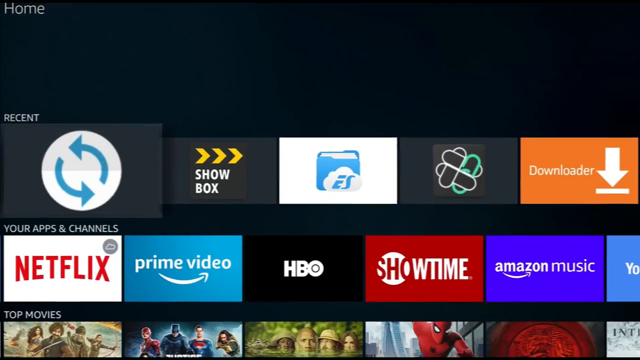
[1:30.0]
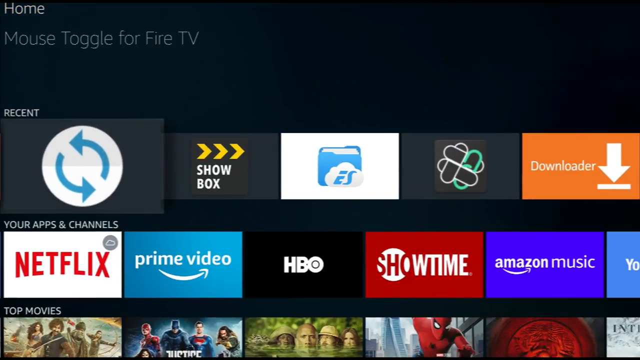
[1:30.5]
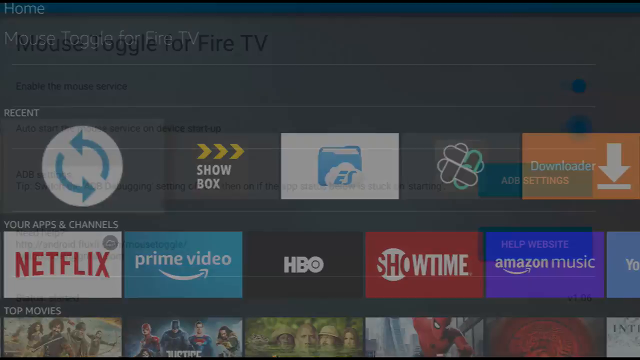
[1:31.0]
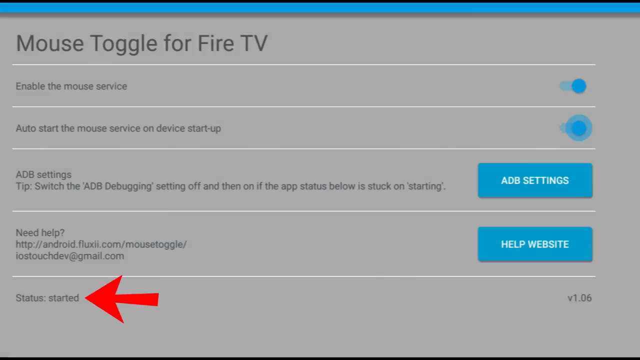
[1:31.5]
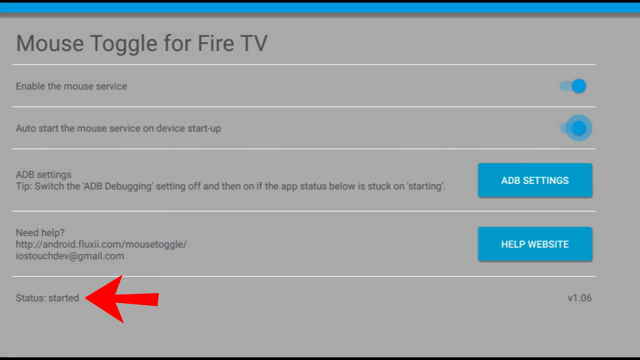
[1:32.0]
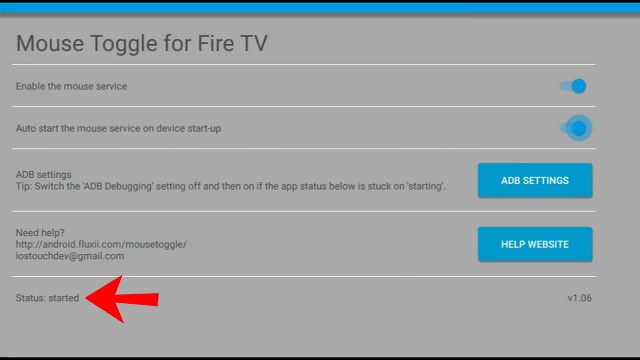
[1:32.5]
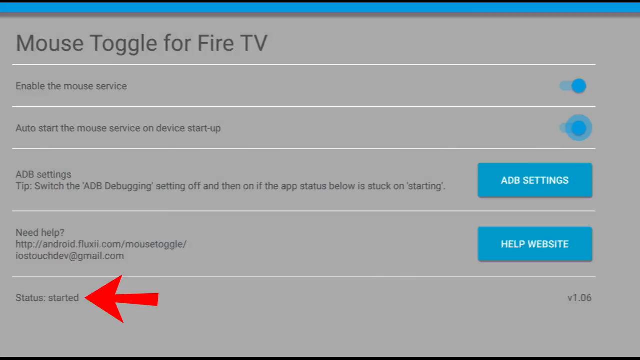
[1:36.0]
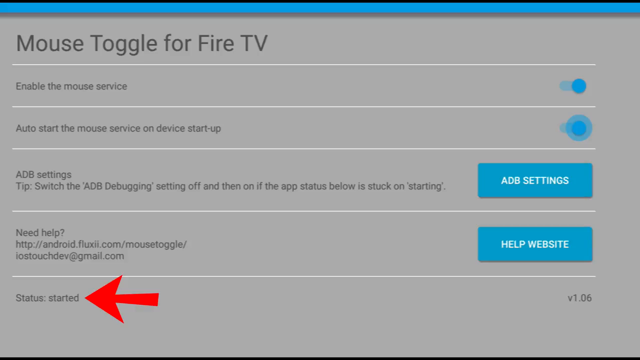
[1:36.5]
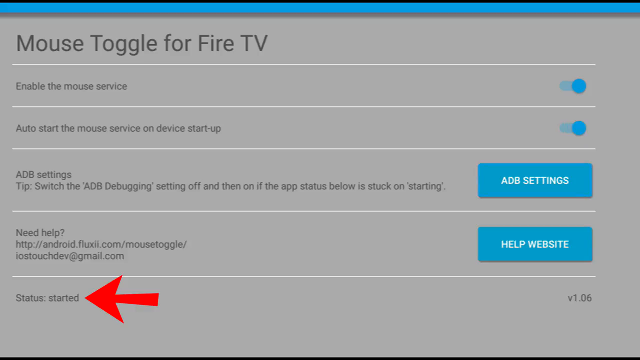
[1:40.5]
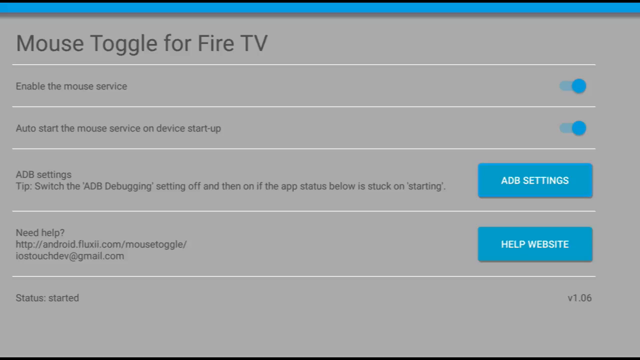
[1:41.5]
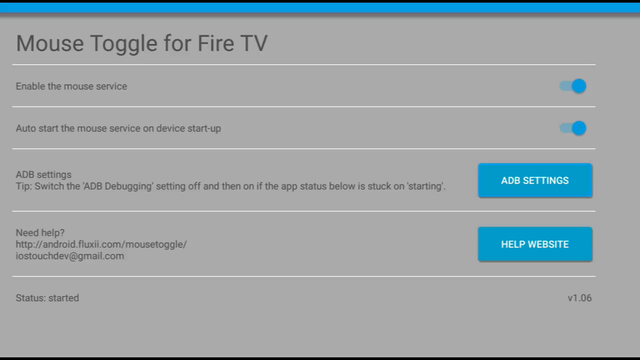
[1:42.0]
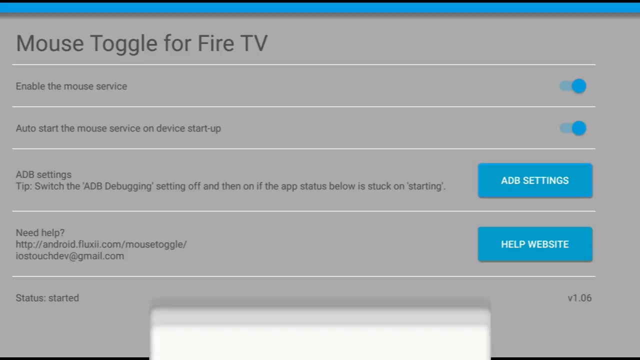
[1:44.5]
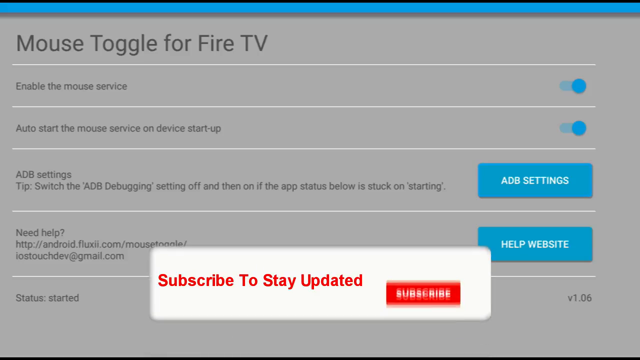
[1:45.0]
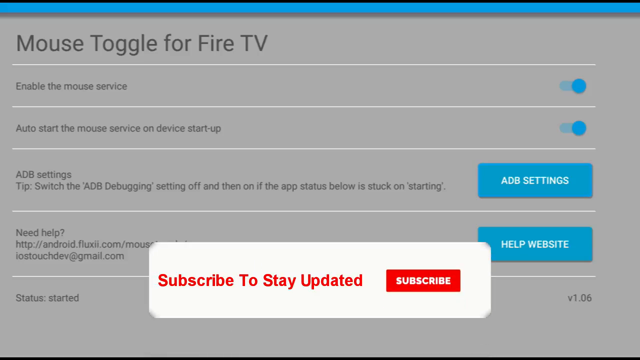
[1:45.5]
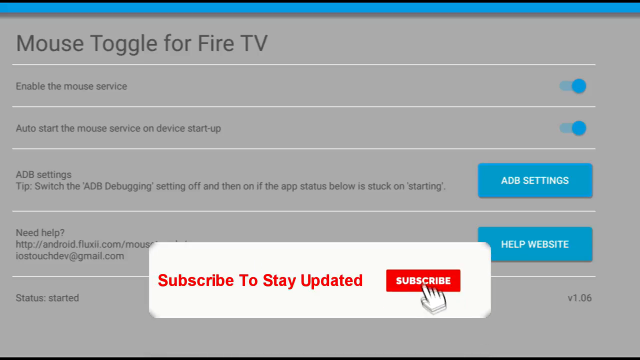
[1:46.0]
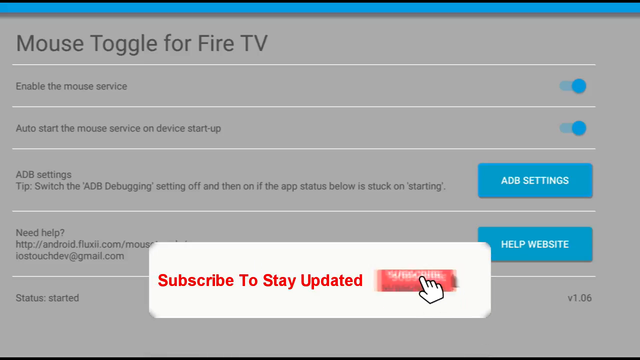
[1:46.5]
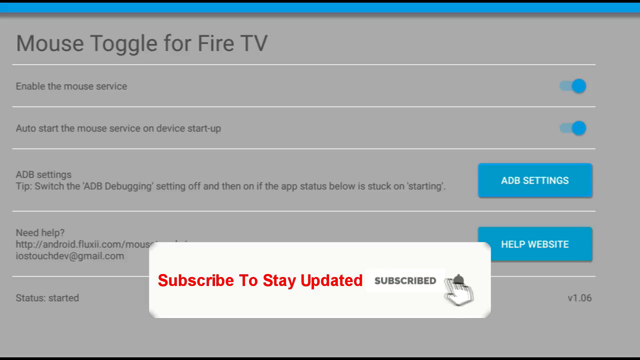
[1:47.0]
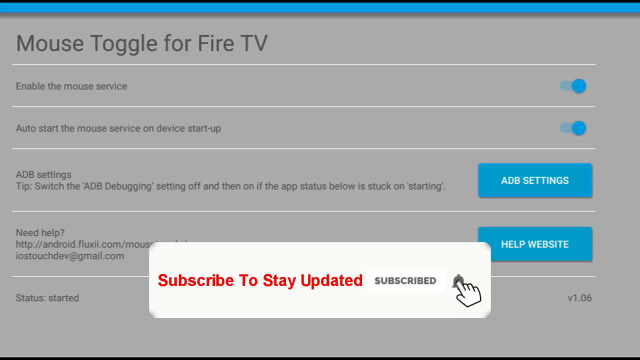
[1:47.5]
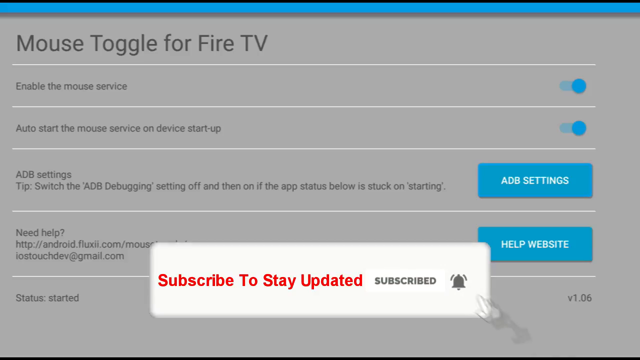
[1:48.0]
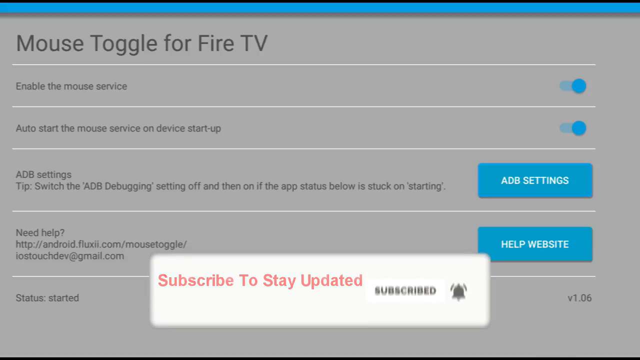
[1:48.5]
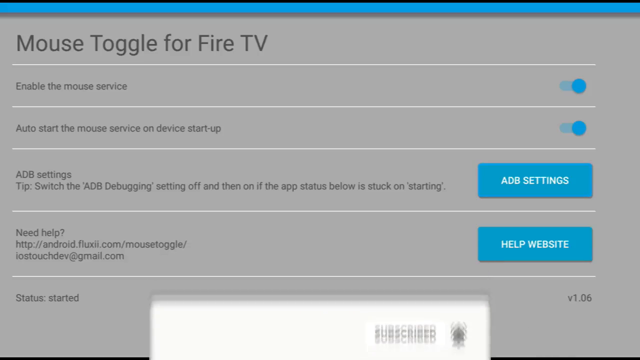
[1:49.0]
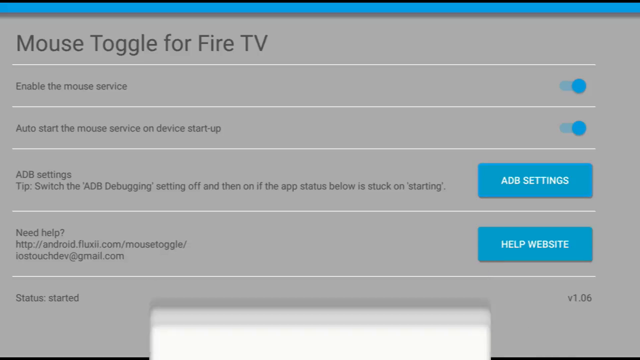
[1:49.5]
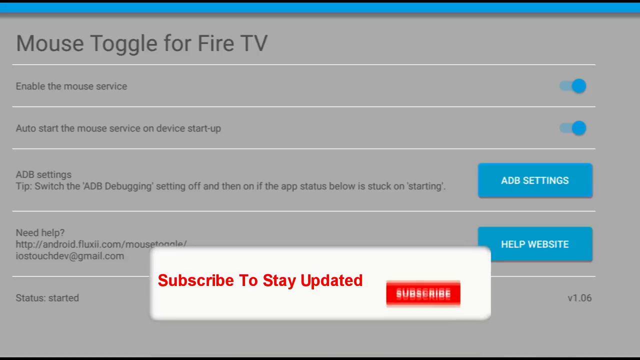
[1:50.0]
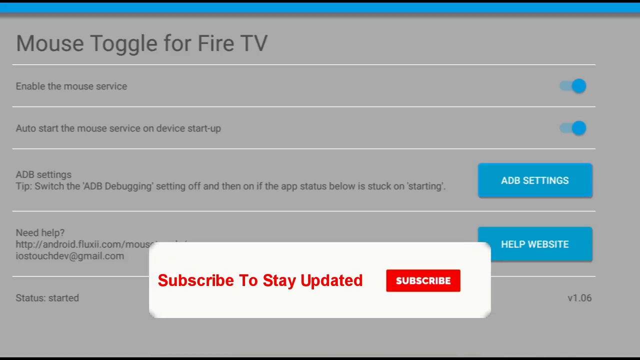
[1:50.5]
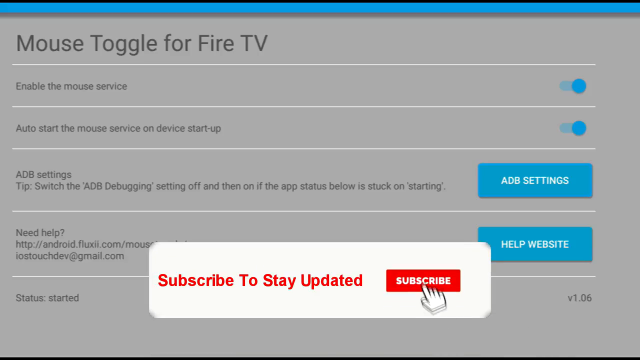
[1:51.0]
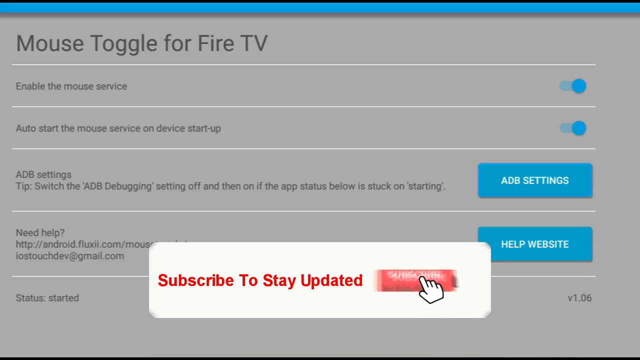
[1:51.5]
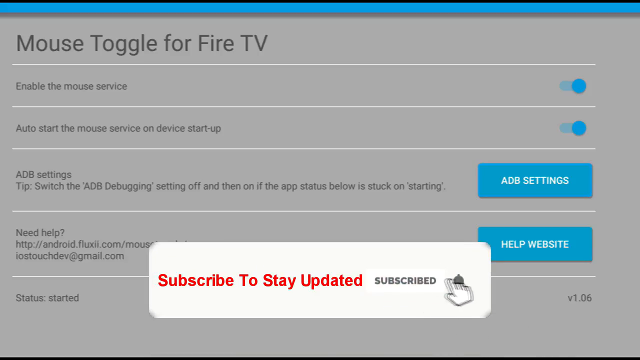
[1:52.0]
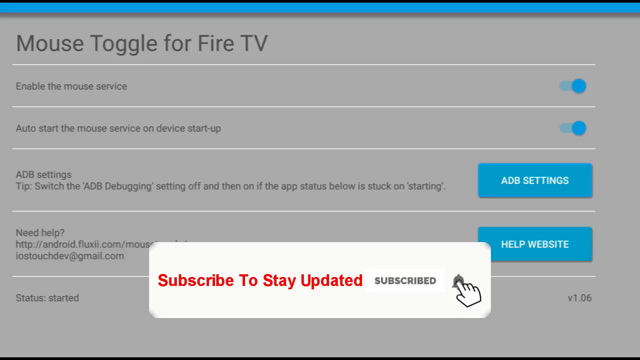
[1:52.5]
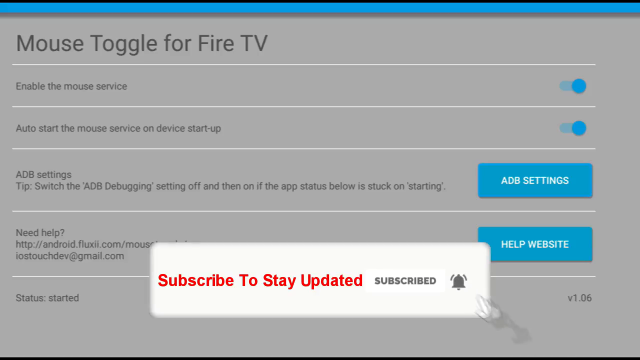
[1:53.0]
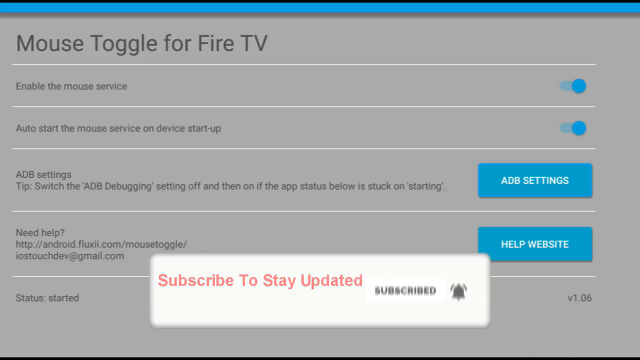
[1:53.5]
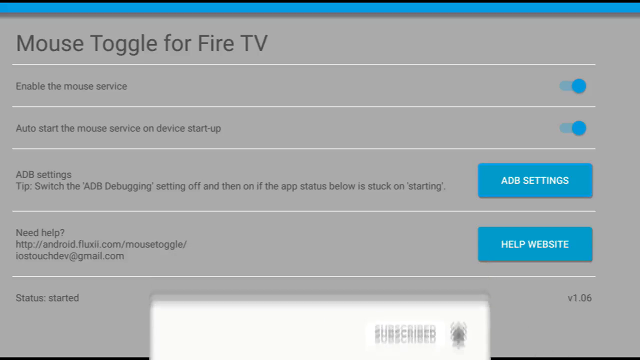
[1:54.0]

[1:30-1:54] From the home screen, the user goes again to the recent tab on the Fire TV, and the view transitions again to the blue and gray background with text explaining each setting. A red arrow pops up again, pointing to the status at the very bottom left, which now says "started". The red arrow disappears, and the box with blue and red text about subscribing appears, disappears to the bottom of the screen, then comes back to the top once more, showing the subscribe button and the bell being clicked in the animation. It then fades away to the bottom of the screen as the video concludes.